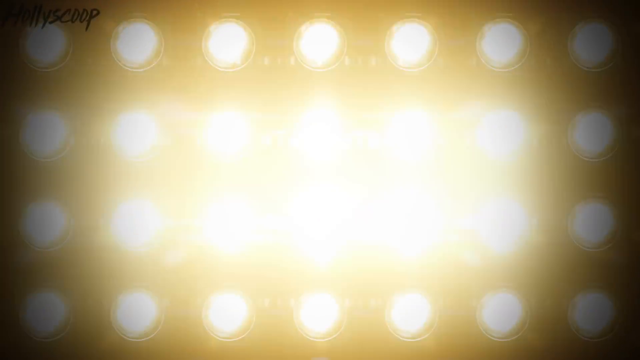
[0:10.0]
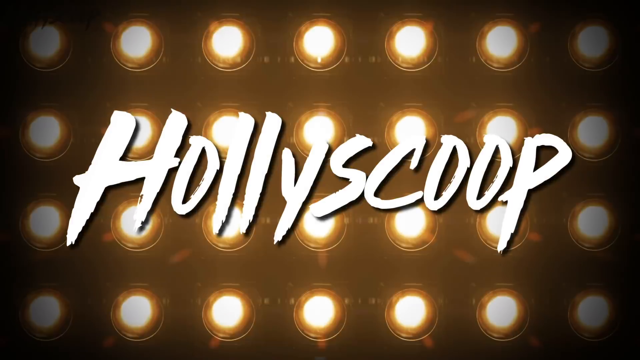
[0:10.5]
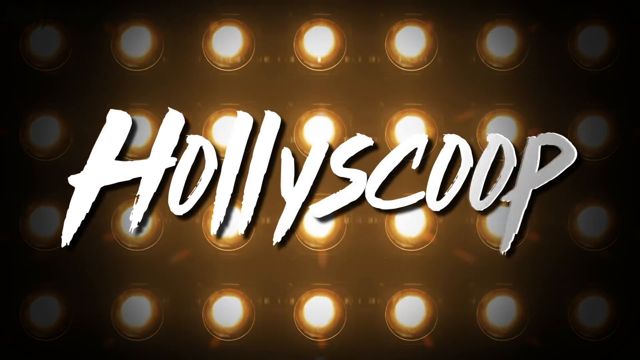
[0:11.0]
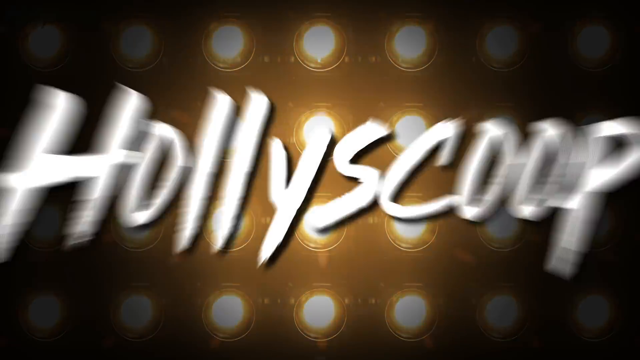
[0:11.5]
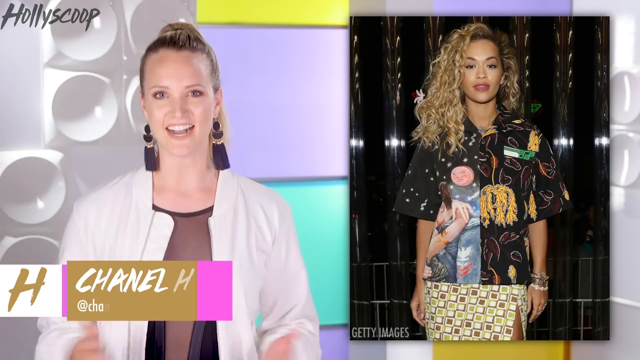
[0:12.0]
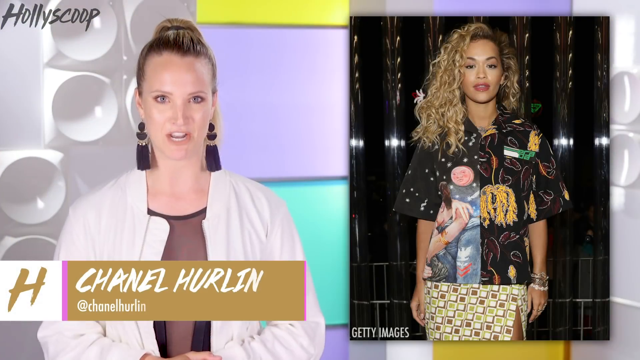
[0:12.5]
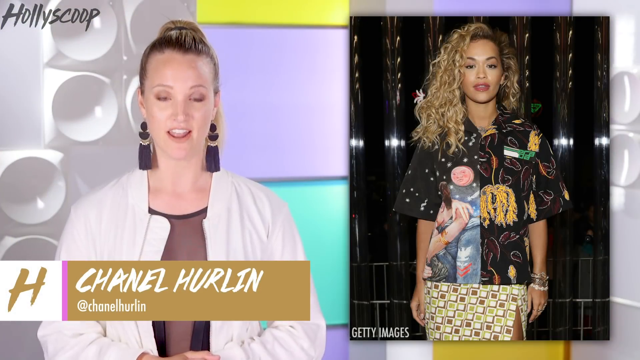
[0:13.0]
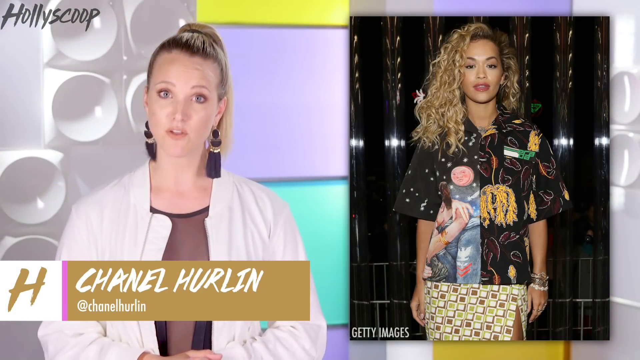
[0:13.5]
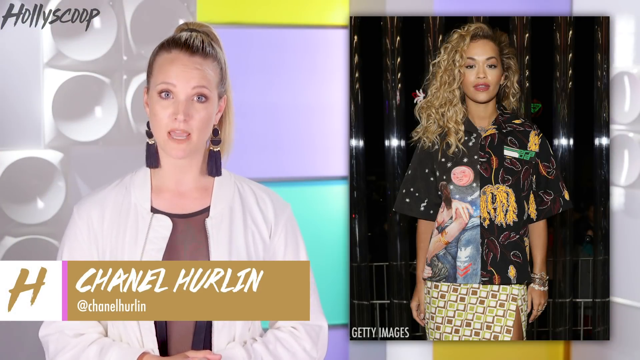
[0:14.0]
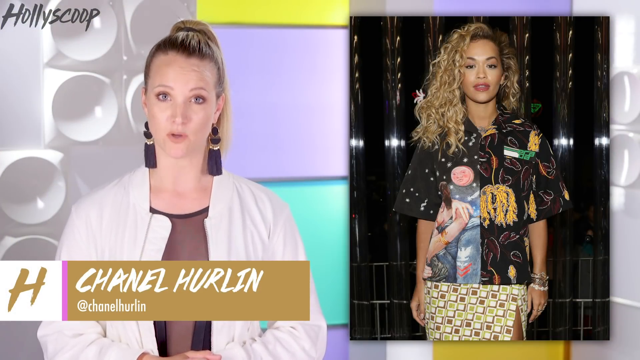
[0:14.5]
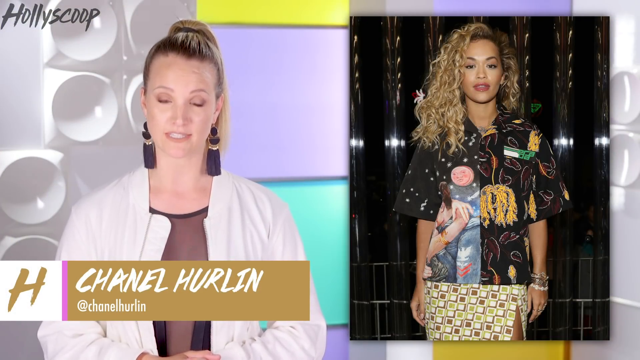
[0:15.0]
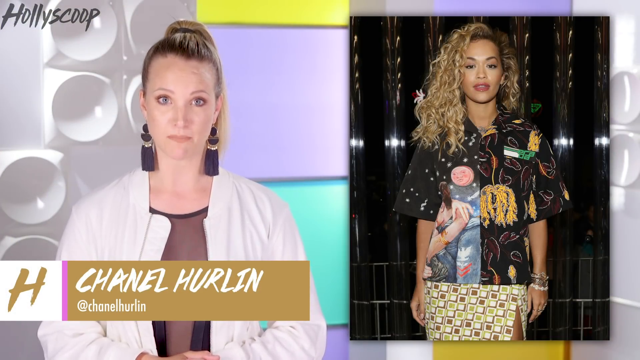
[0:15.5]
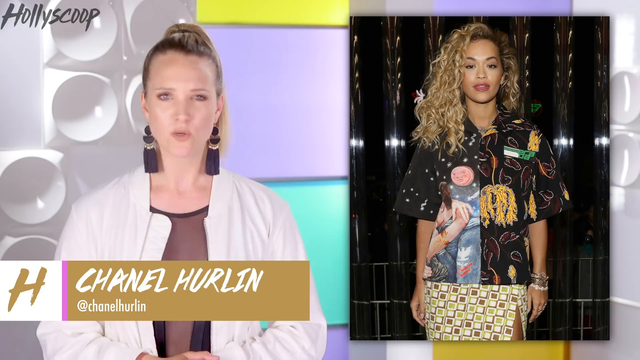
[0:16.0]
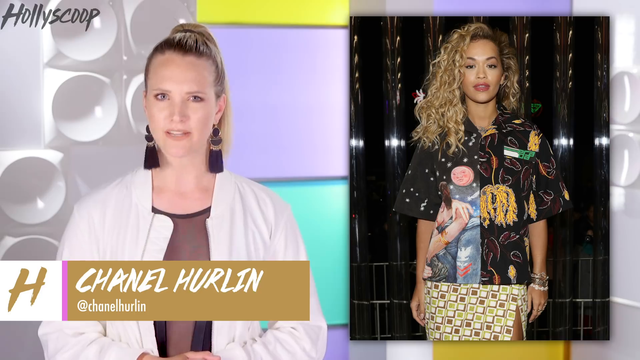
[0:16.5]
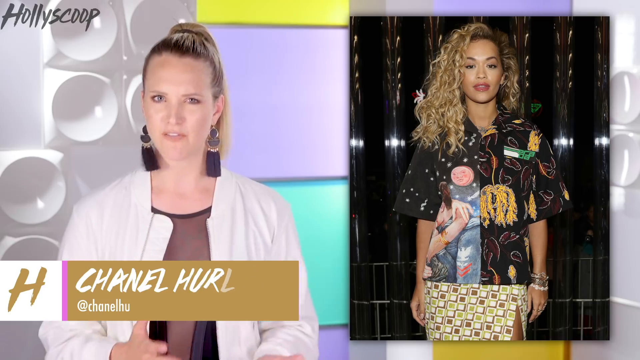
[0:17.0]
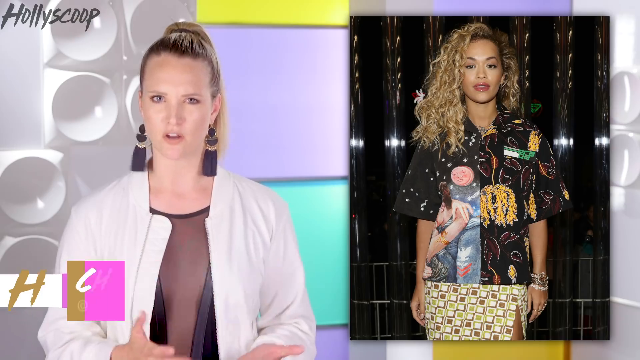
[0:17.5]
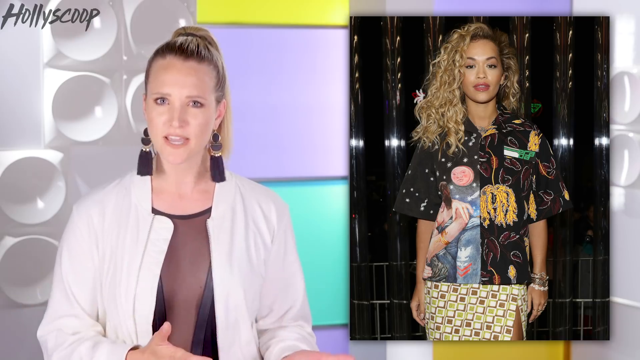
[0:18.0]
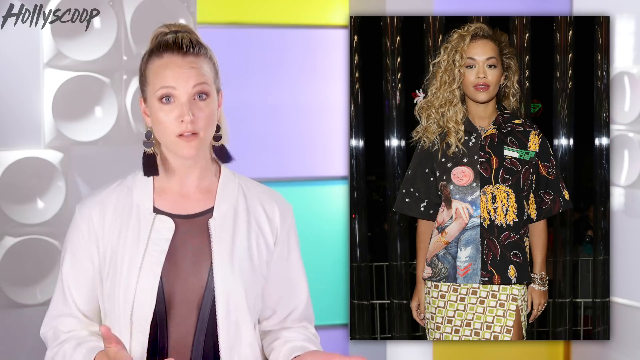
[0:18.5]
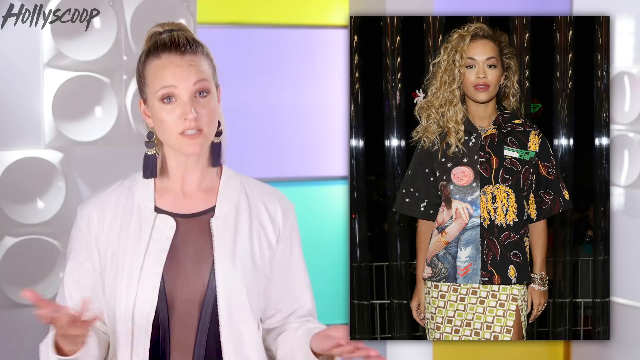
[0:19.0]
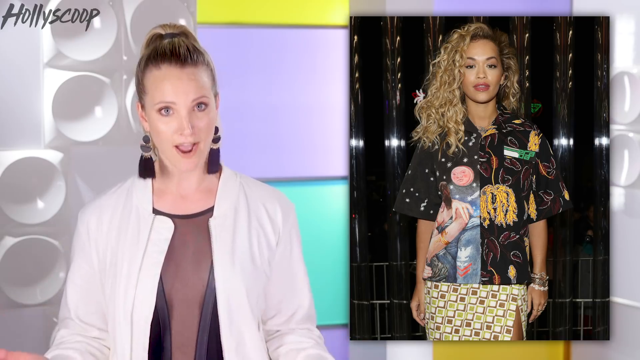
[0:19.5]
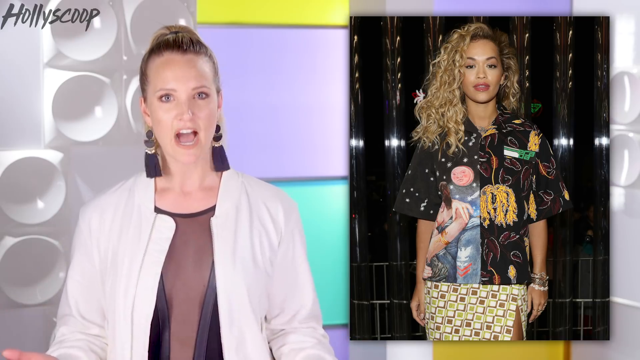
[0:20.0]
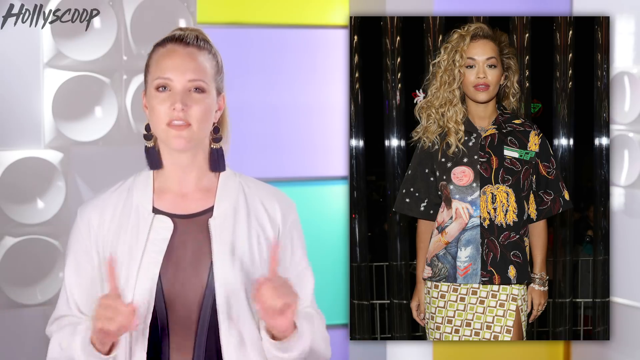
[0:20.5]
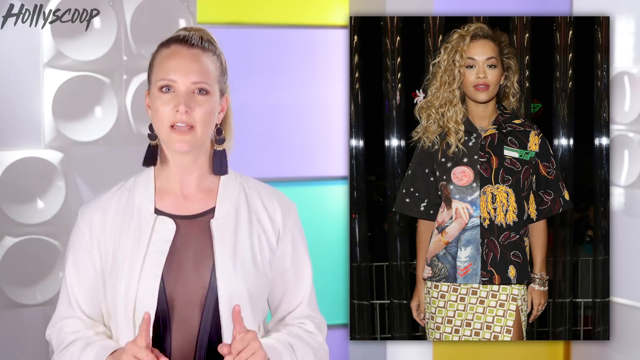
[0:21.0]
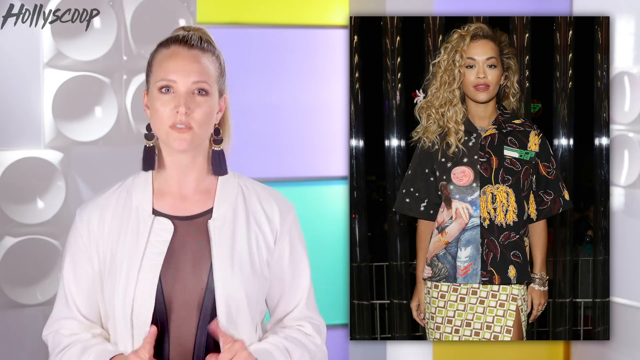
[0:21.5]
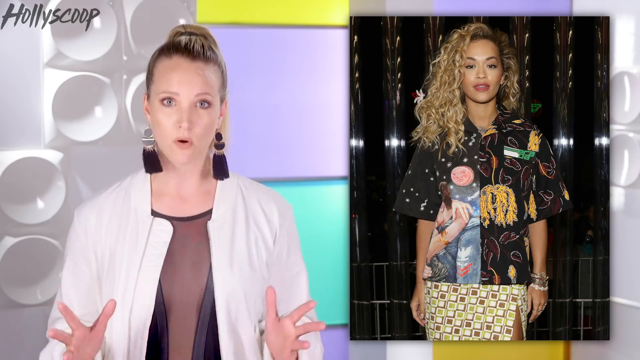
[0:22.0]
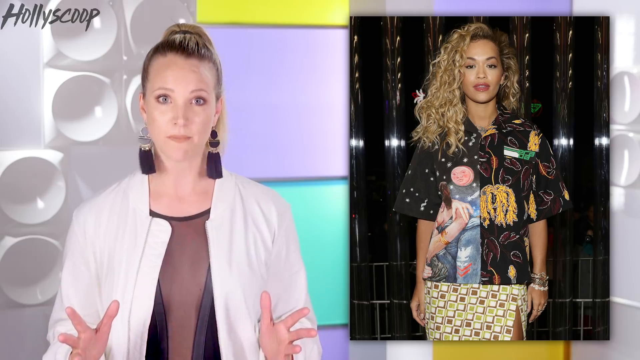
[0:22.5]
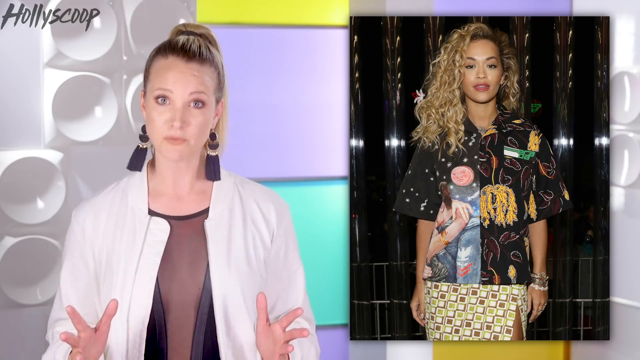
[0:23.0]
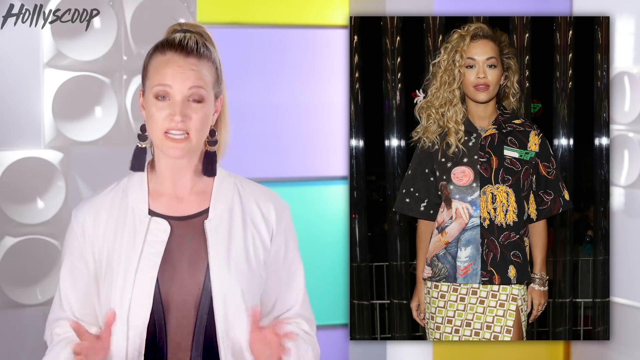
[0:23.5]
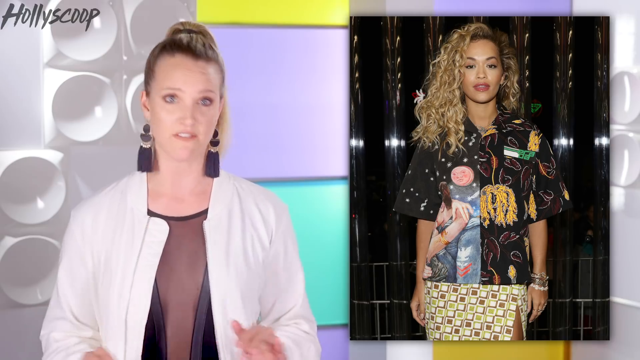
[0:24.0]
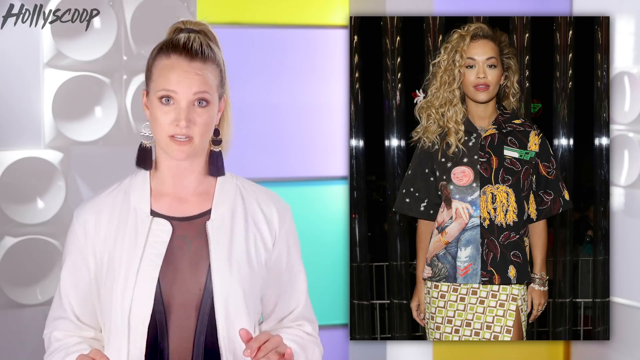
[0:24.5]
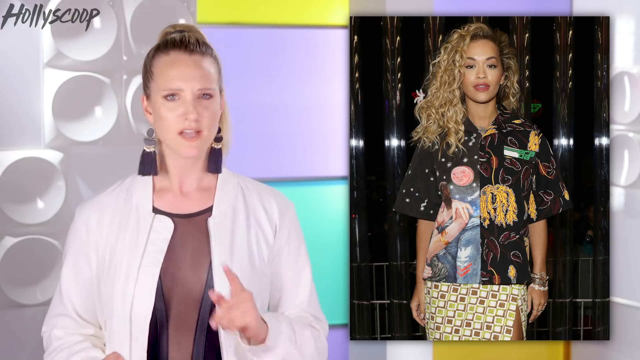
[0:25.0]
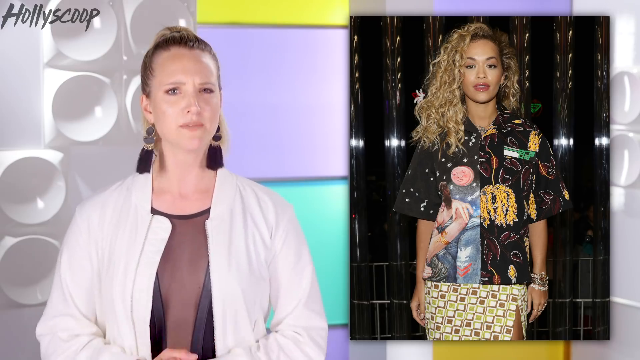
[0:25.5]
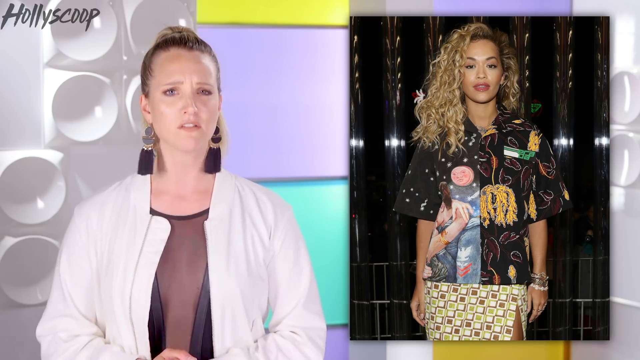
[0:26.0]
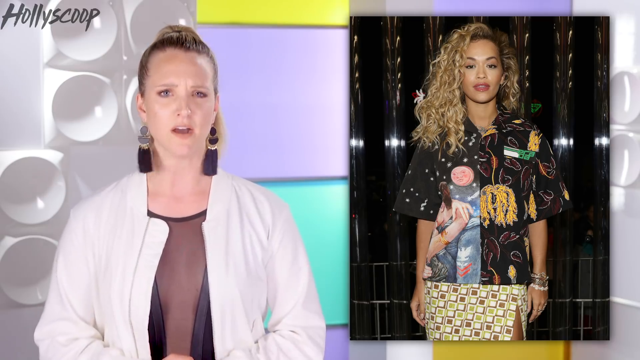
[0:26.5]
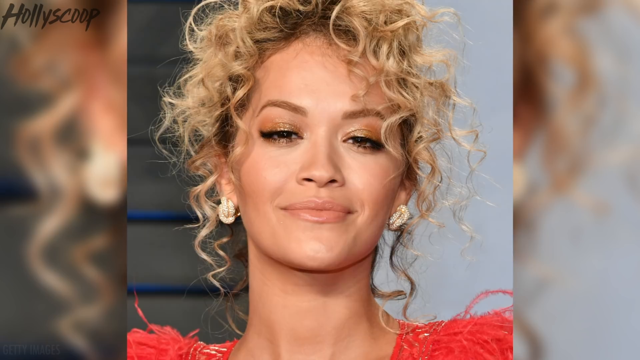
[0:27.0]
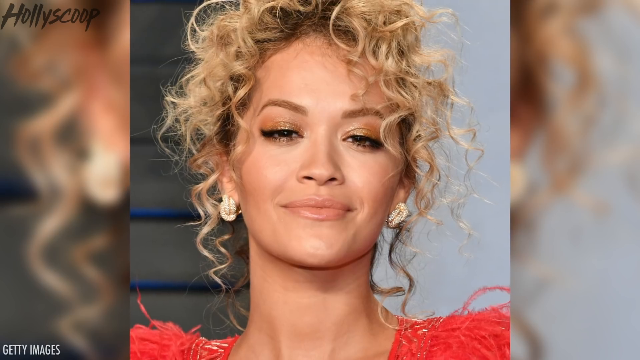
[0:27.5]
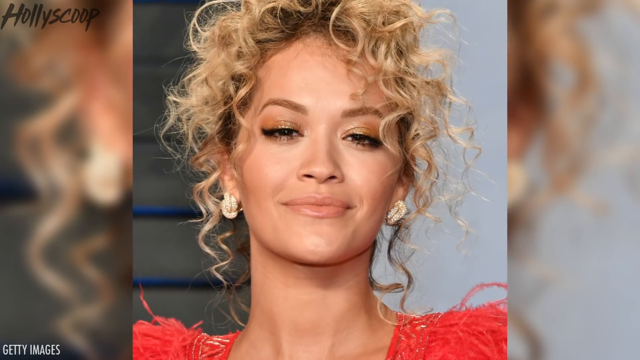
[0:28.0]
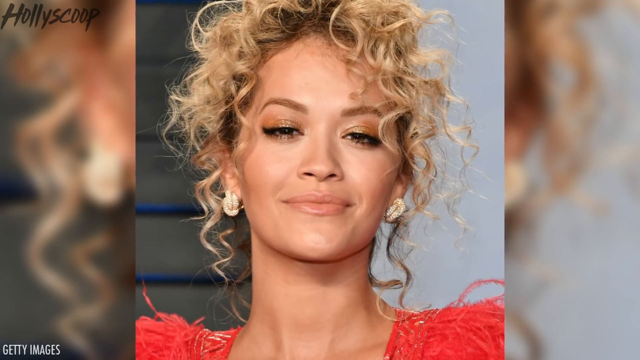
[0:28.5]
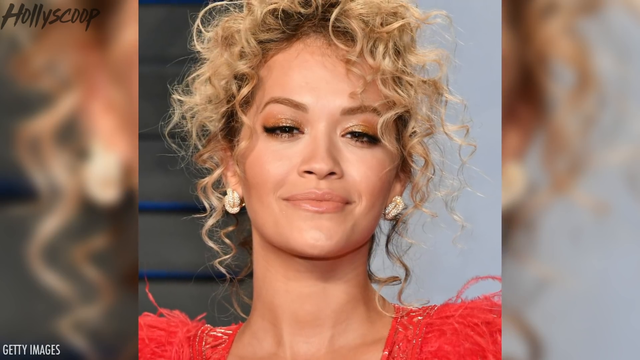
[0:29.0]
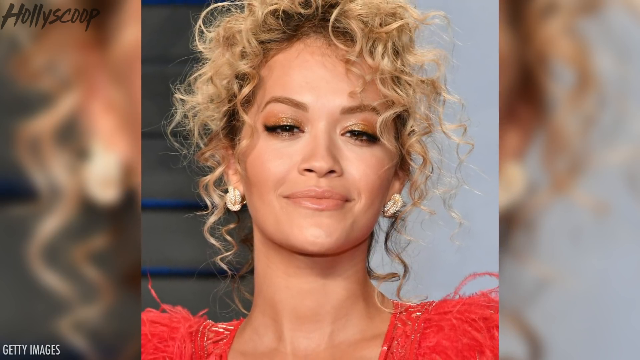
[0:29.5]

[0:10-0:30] A series of spotlights forms an intense background behind white text in stylized fonts reading "Holly Scoop". The video cuts to what looks like a celebrity talk or entertainment show hosted by Chanel Hurl, a blonde woman with her hair pulled back. She wears a white leather jacket over a transparent black top with a plunging neckline that goes well beyond chest level, and two dark navy earrings that look like tassels, almost like those on a rug. The background is decorated with different artistic patterns: on one side an almost pop-out pattern in white, on the other colored panels in an almost abstract style in yellow, light purple and teal. Off to the right, a picture shows what appears to be Rita Ora in a more casual outfit with her signature blonde curls. She wears a dress shirt with several graphics that are very hard to make out: it looks like two people kissing, with two arms interlocked, what looks like a military jacket on one and a bare arm with an armband on the other, plus other graphics that look like a mix of a starry night, a plant and some hard-to-identify floating objects. Her skirt has an almost tile pattern of dark green and brown squares, with a slit on the left leg. The host moves her hands around dramatically with her fingers spread out, her expressions shifting intensely from shock to surprise.